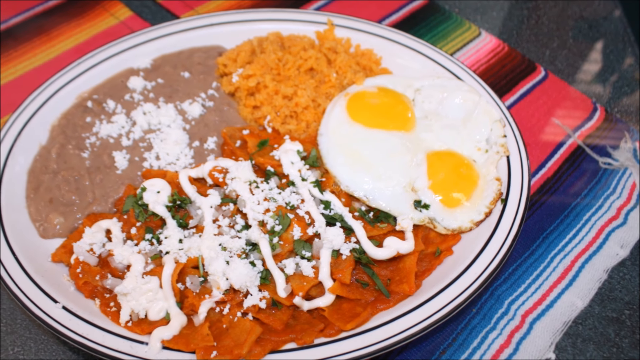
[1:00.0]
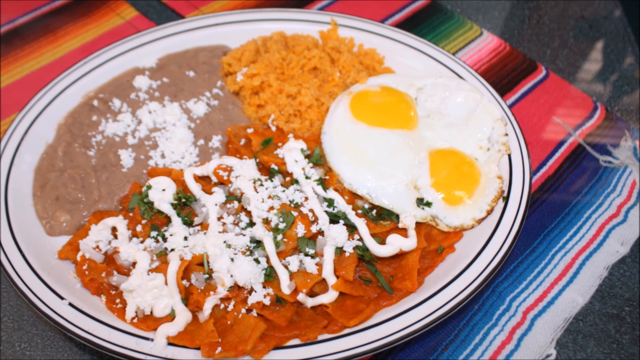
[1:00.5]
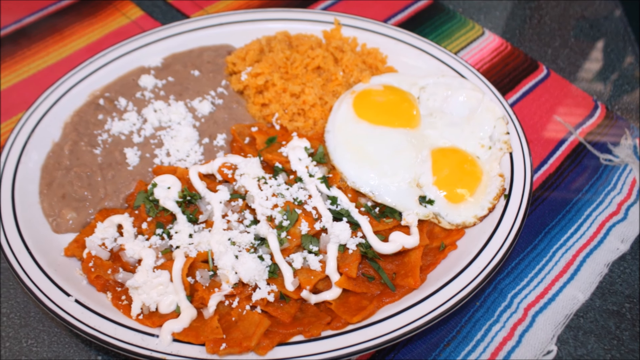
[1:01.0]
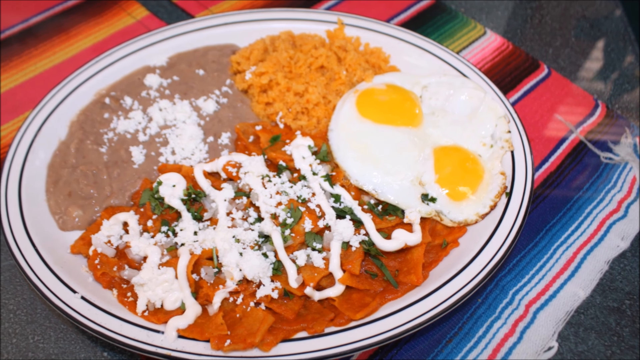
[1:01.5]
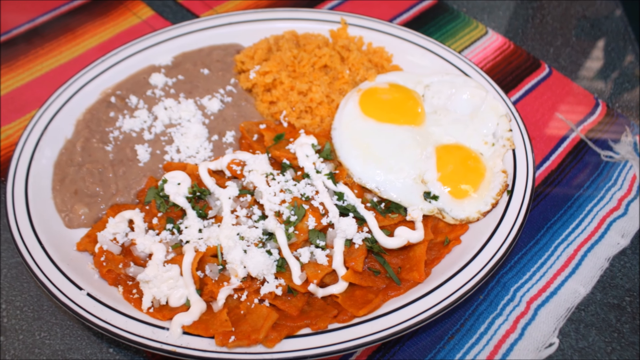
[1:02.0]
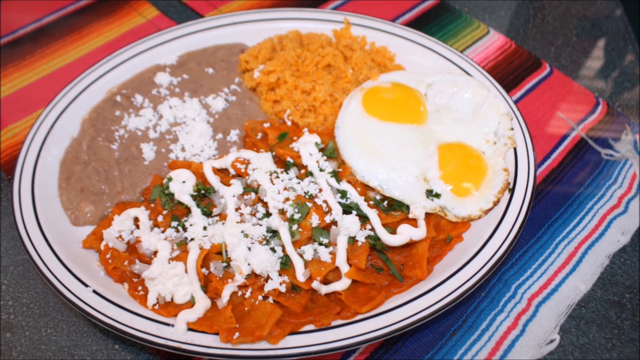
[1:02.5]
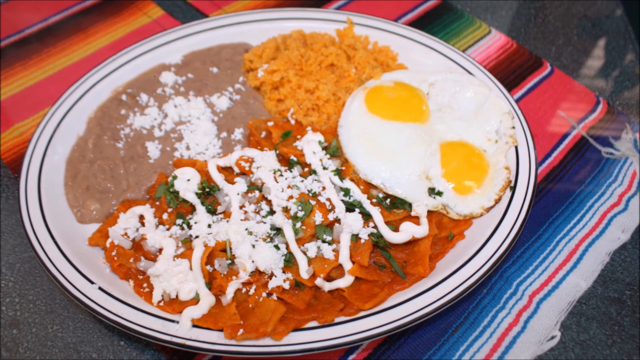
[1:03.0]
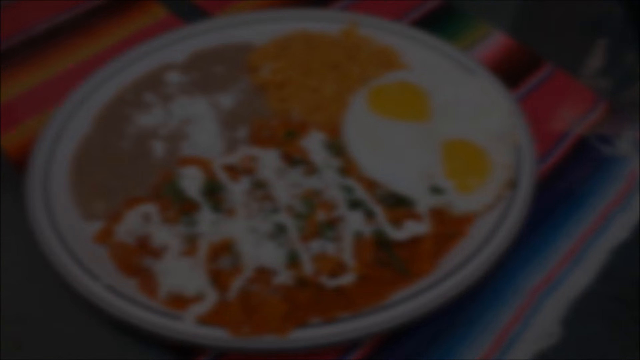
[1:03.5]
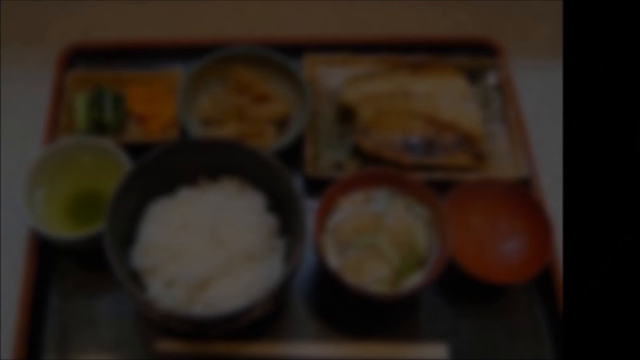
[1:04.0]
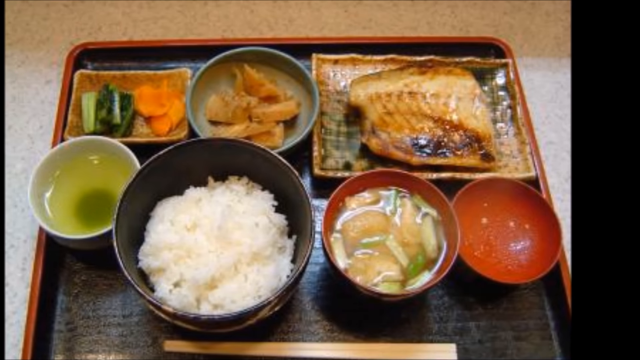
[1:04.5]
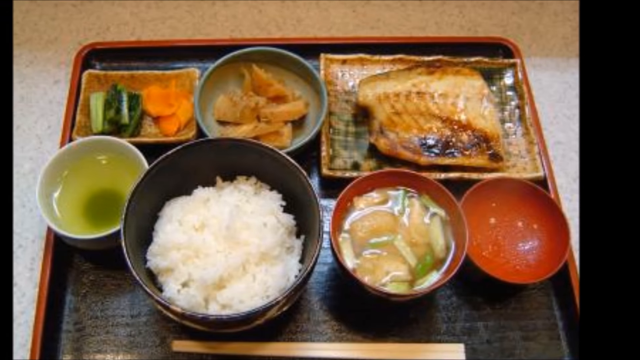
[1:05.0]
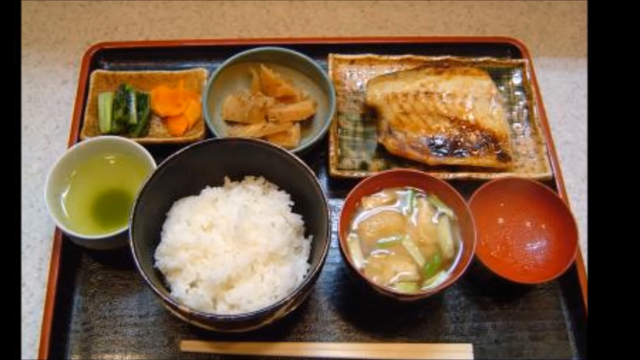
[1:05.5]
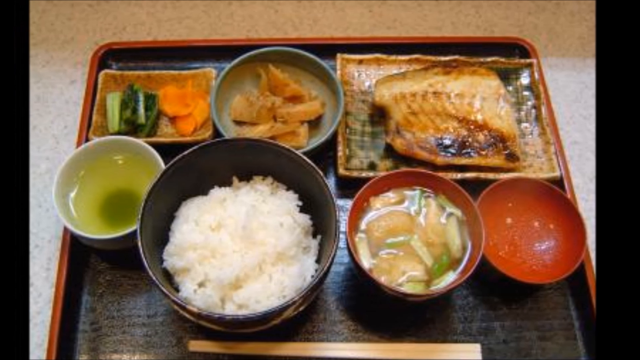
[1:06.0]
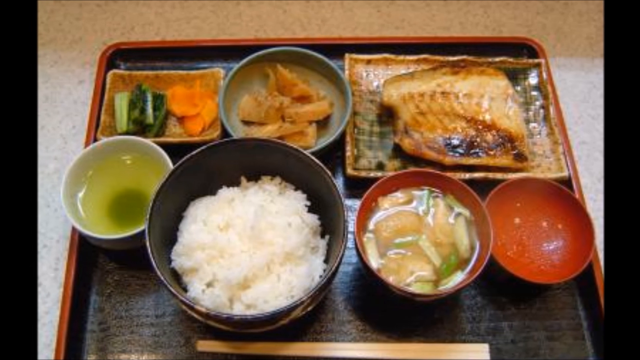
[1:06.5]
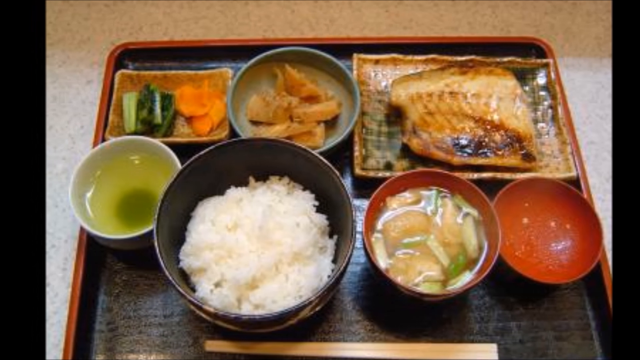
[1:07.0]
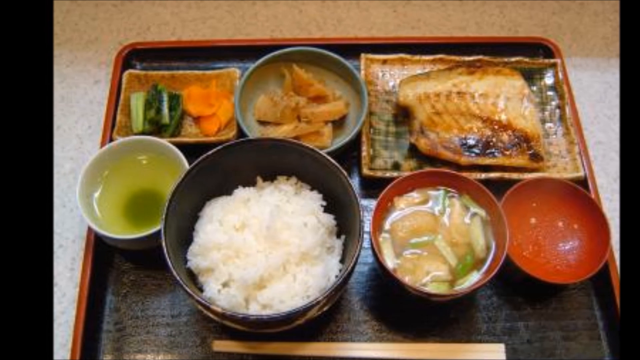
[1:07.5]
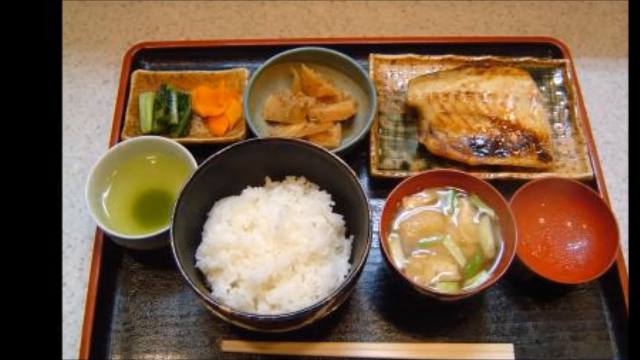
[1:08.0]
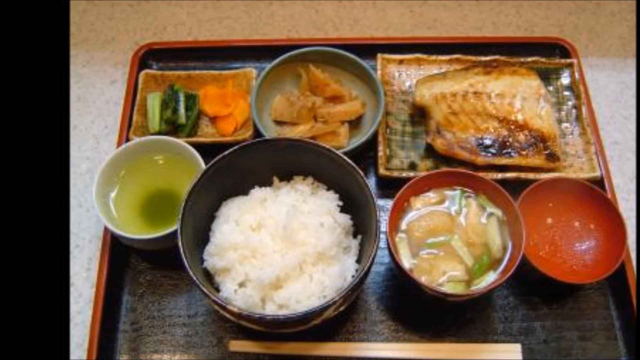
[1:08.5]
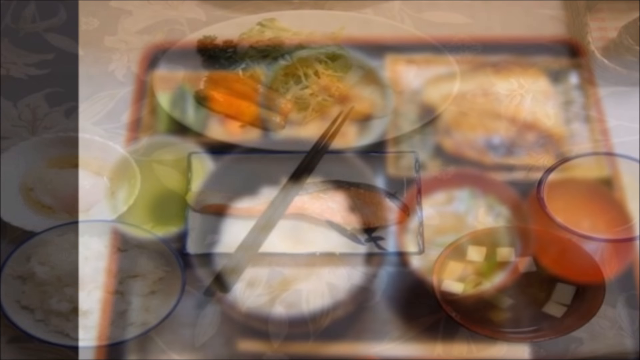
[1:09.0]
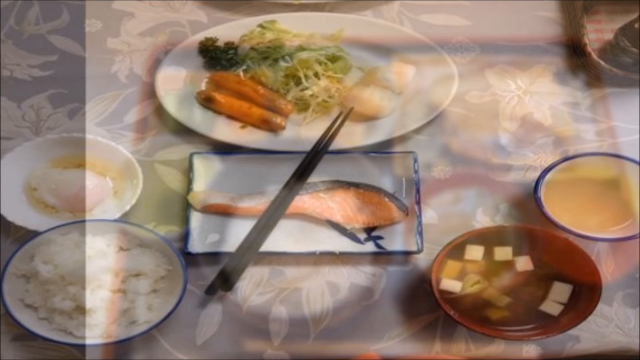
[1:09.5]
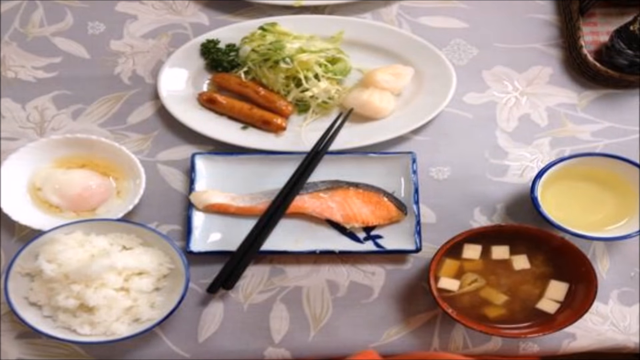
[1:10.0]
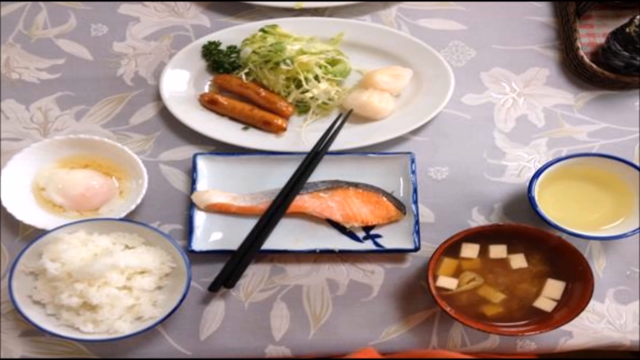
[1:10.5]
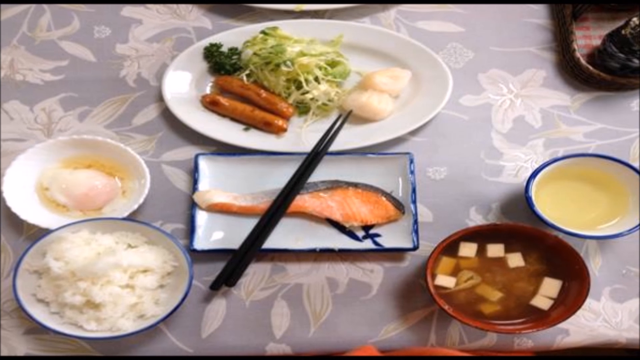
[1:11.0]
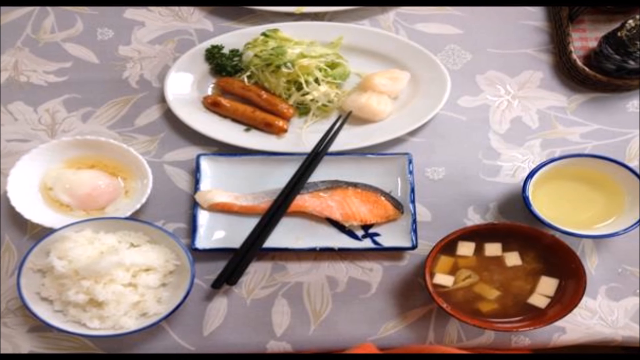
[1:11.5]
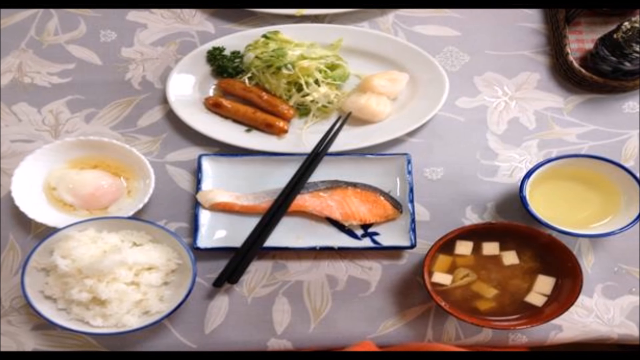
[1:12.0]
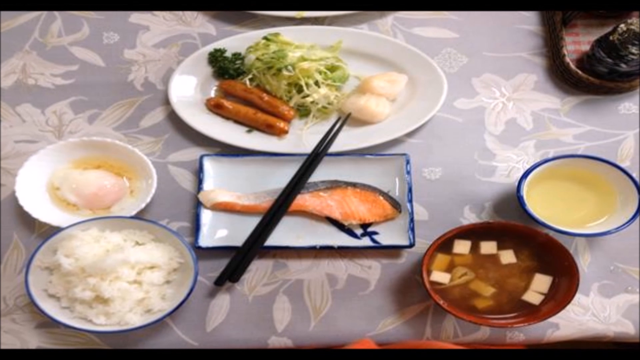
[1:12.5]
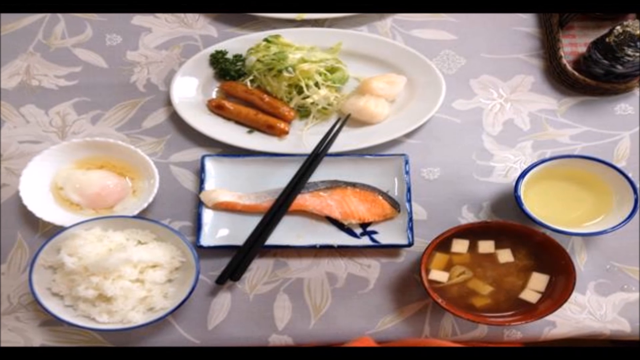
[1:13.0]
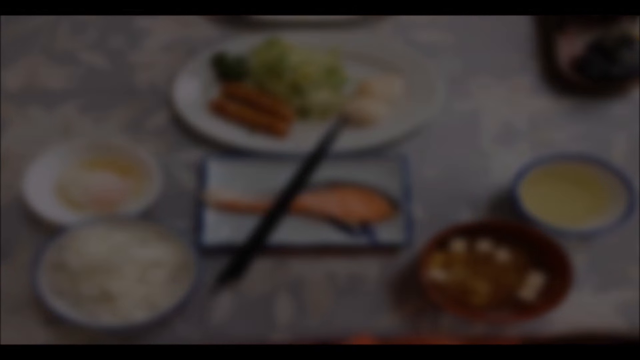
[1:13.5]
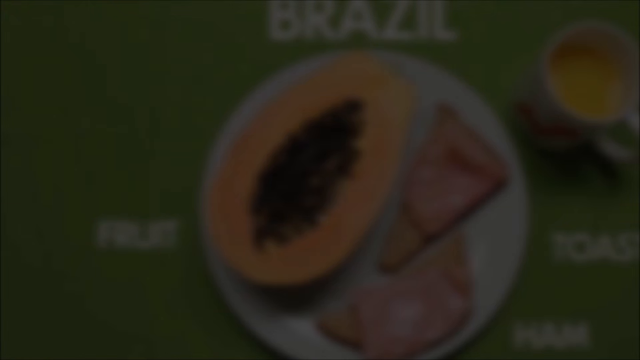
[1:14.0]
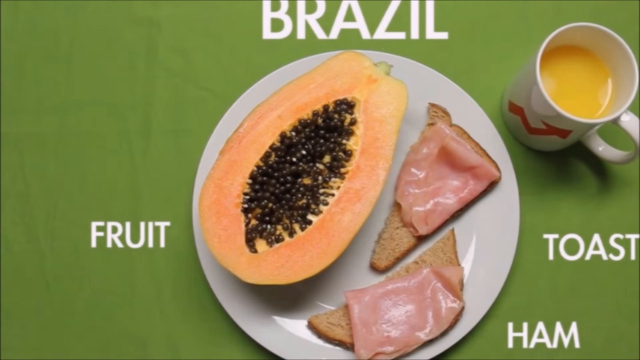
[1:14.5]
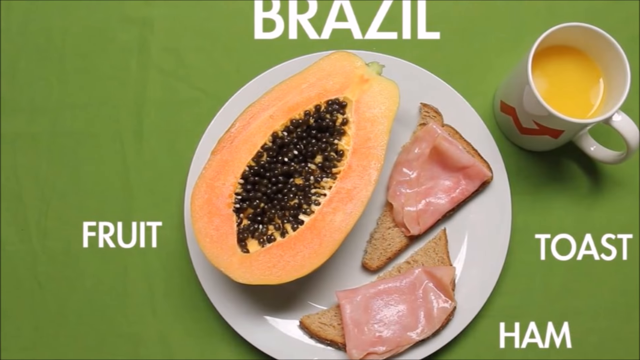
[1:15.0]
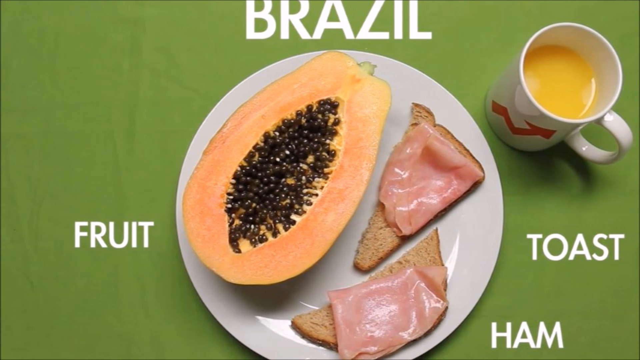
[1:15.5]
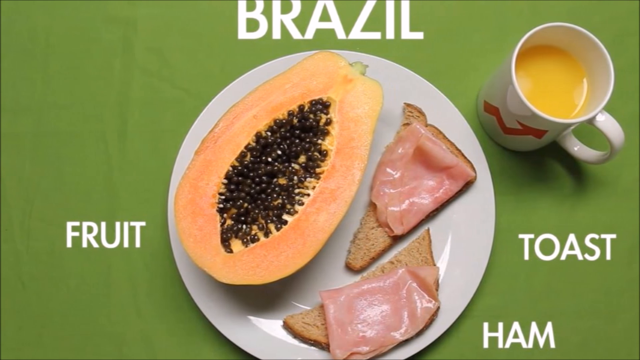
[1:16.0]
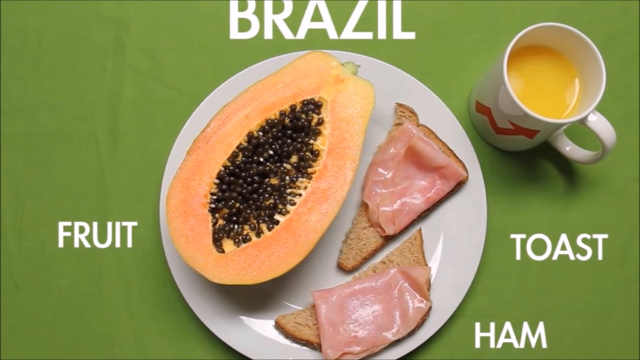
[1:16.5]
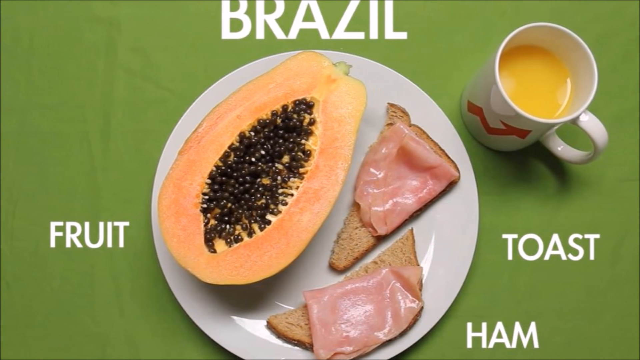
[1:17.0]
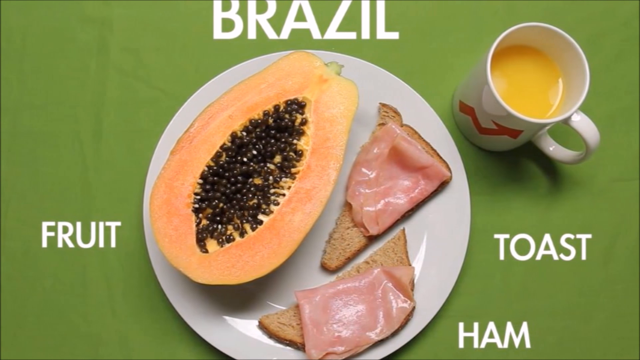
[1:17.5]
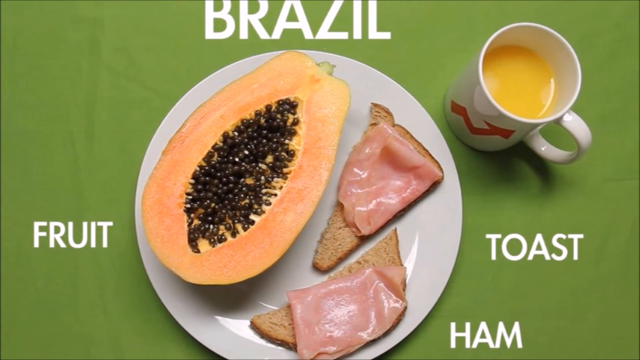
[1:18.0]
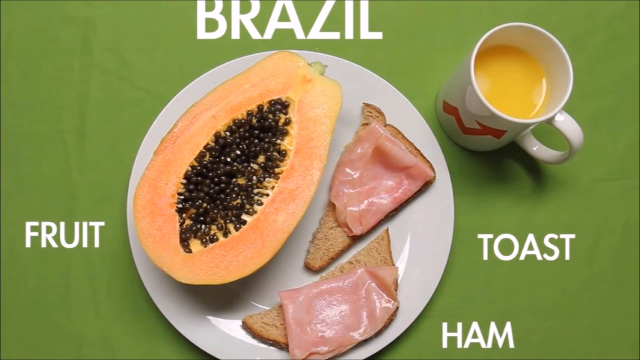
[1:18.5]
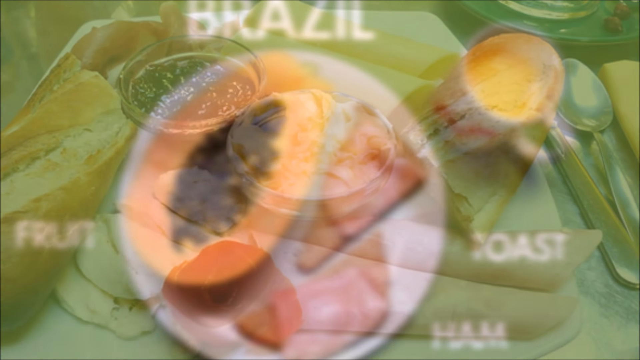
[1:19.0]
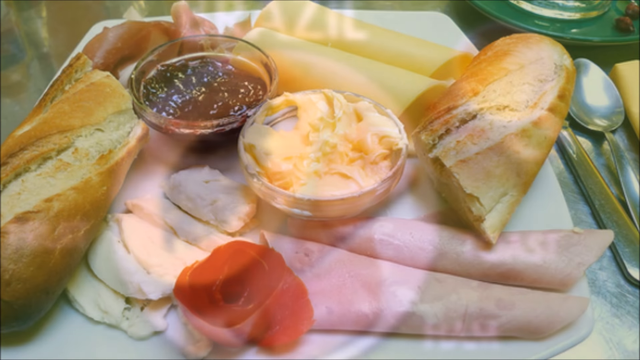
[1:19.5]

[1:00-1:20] A large white plate with thin black lines on the outer rim holds refried beans sprinkled with Mexican cheese at the upper left, yellow rice in the upper section, two fried eggs, and a pile of orange sauce covered in cheese and sour cream, on top of a rainbow-striped cloth. The view zooms out and fades to black. Another breakfast fades in on a lacquered black tray. At the top left is a small rectangular container with a green vegetable and a carrot; in the upper portion is a light blue round tray with some kind of pickled root vegetable; at the upper right is a smaller lacquered rectangular tray with a piece of grilled fish. The bottom row has a small cup of green tea, a black bowl of rice, a small orange bowl of soup, and an empty shallow orange bowl. The entire image slides to the right. Another breakfast fades in on a gray floral tablecloth. In the middle is a square blue china plate with a piece of fish on it, with a pair of black chopsticks lying across the fish. Above it is a plain white plate with two sausages, a pile of greens and two white lumps. To the left of the middle plate is a shallow white dish with a white lump in it covered in liquid, and below that is a shallow white dish with a blue rim filled with rice. At the bottom right is a brown bowl filled with miso soup and tofu cubes, and a shallow blue and white dish filled with a yellow liquid is to the upper right of that. The view zooms out. It cuts to an image of a green backdrop with a white plate in the middle. On the plate are a halved papaya at the upper left and two pieces of toast to its bottom right, each with a slice of meat on it. To the upper right is a mug with a red arrow pointing up on its side, filled with an orange liquid. The text "Brazil" is above the plate, "fruit" is to the left of the plate, "toast" is to the right of the plate, and the word "ham" is under the word "toast". The image pans to the right.